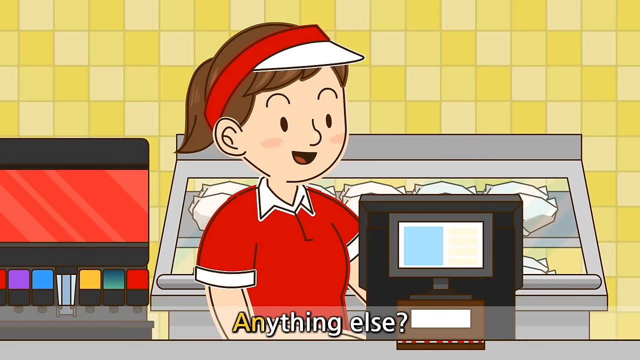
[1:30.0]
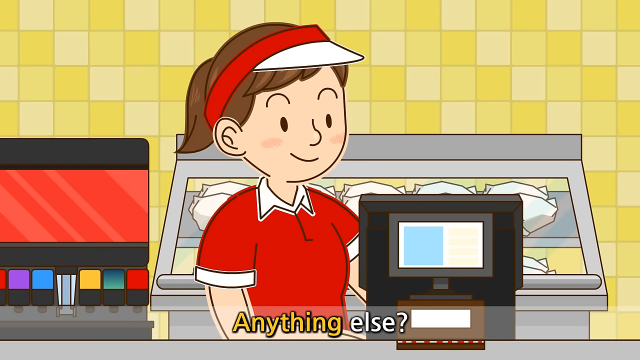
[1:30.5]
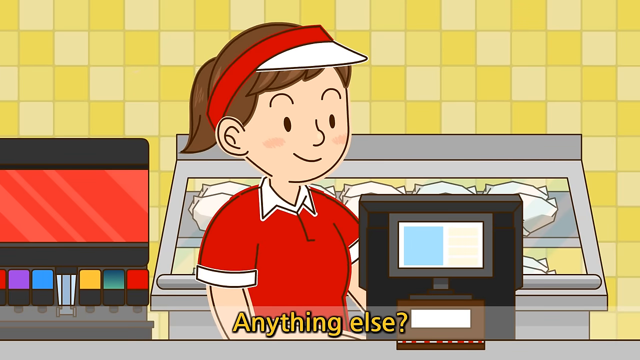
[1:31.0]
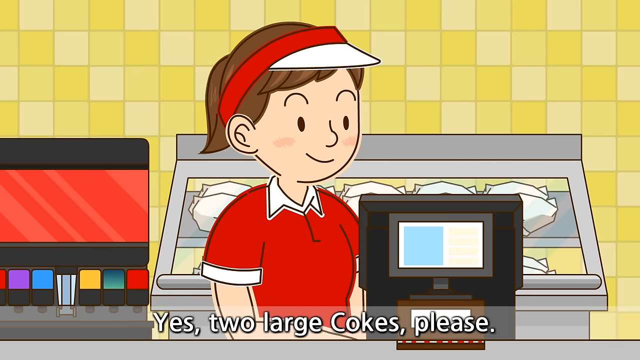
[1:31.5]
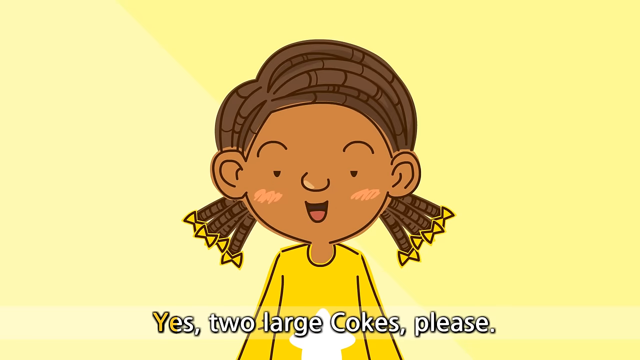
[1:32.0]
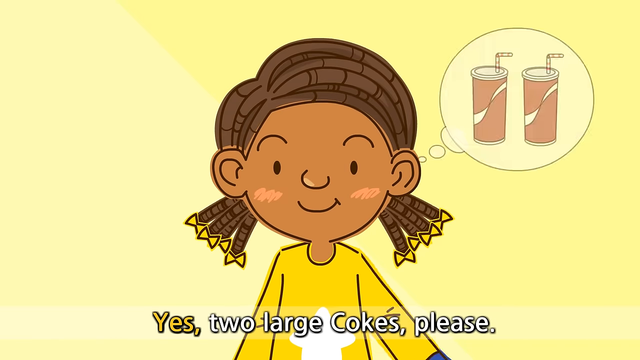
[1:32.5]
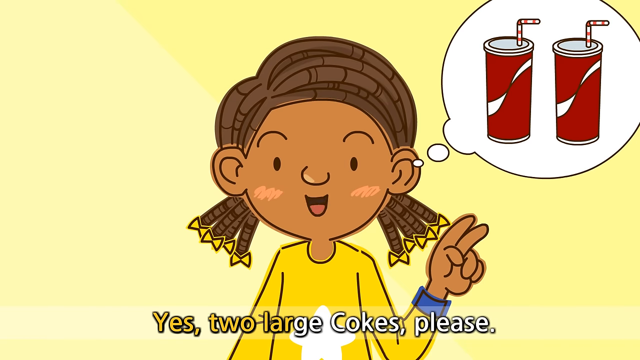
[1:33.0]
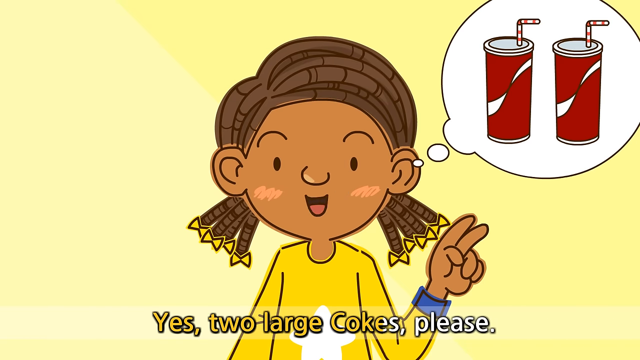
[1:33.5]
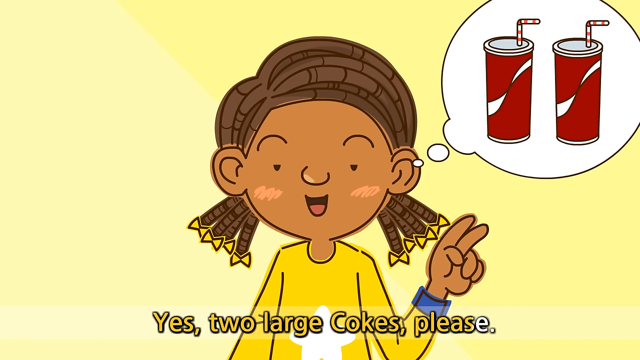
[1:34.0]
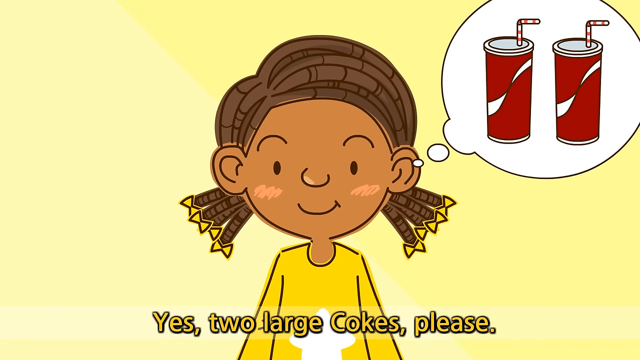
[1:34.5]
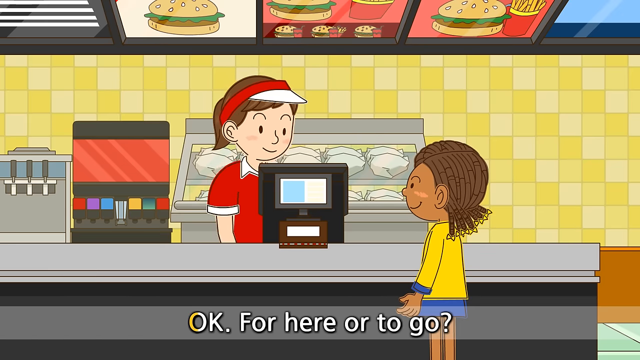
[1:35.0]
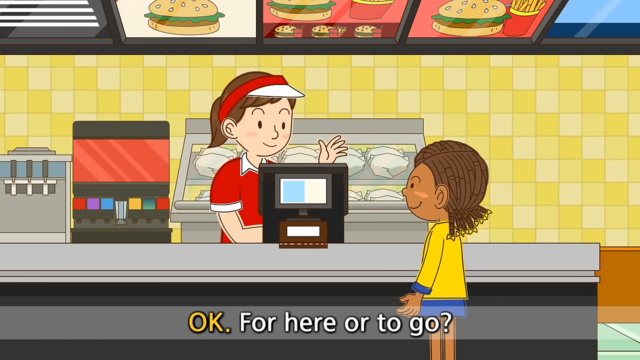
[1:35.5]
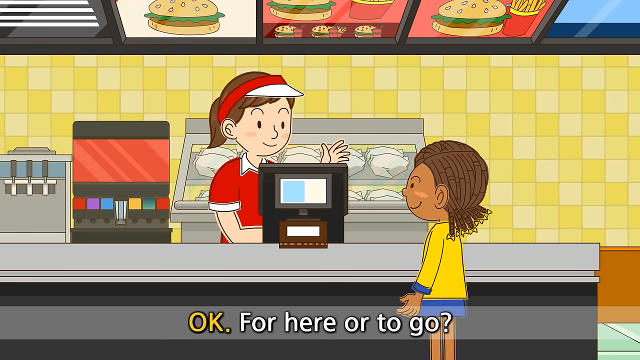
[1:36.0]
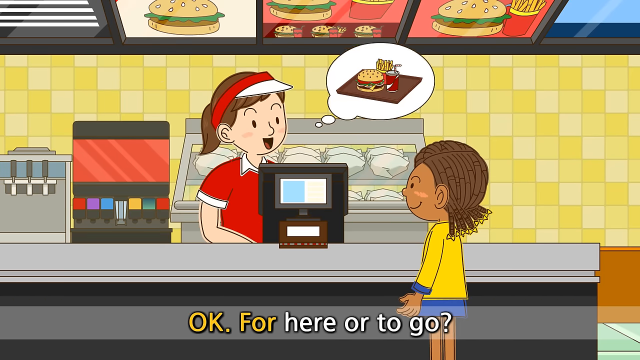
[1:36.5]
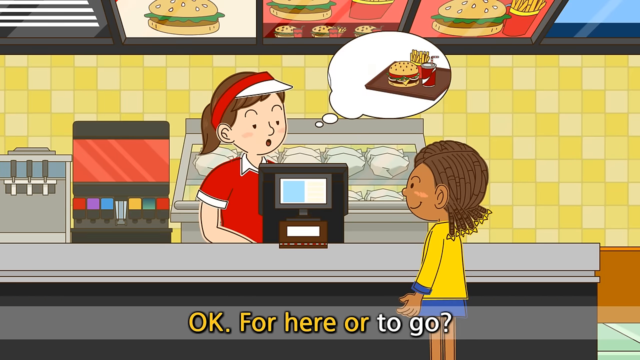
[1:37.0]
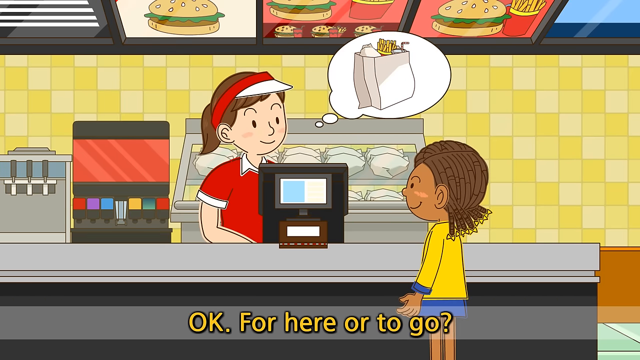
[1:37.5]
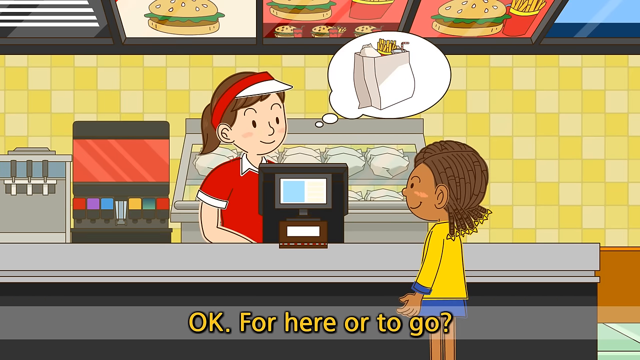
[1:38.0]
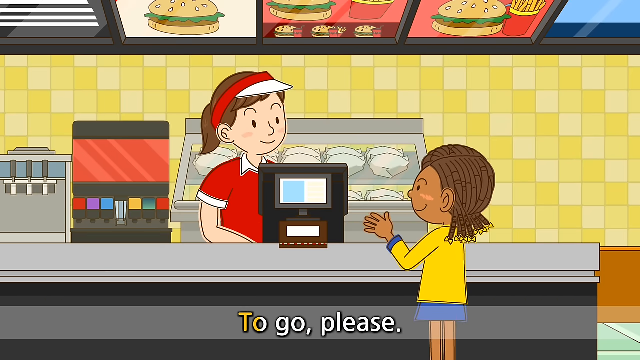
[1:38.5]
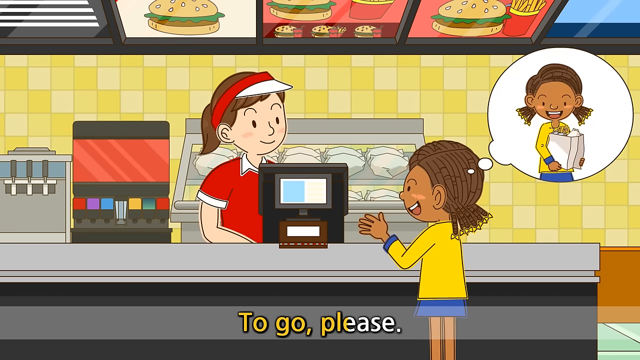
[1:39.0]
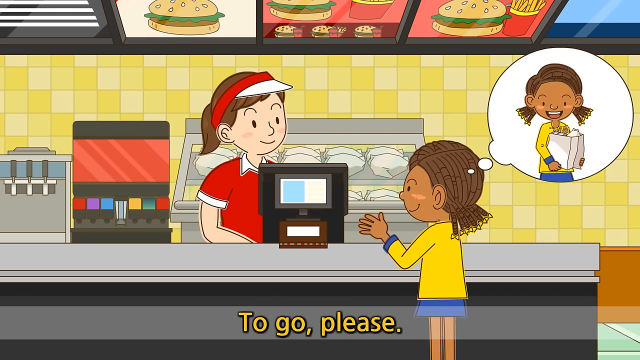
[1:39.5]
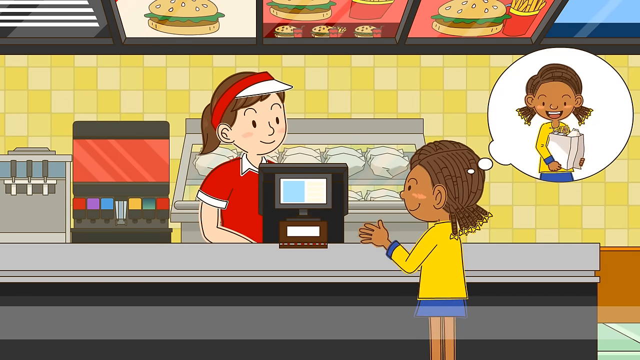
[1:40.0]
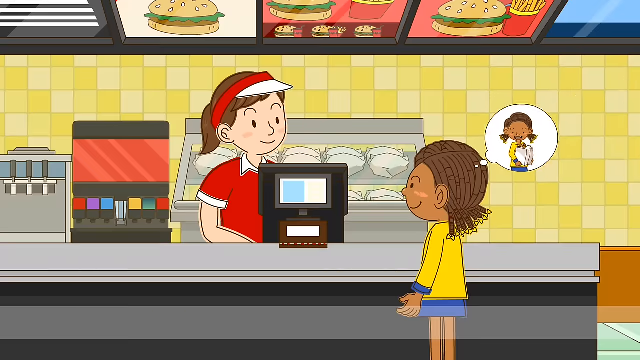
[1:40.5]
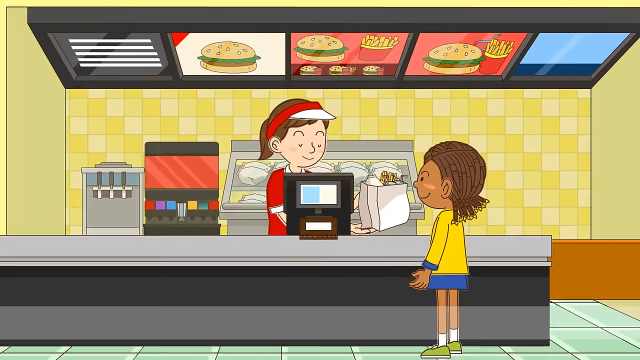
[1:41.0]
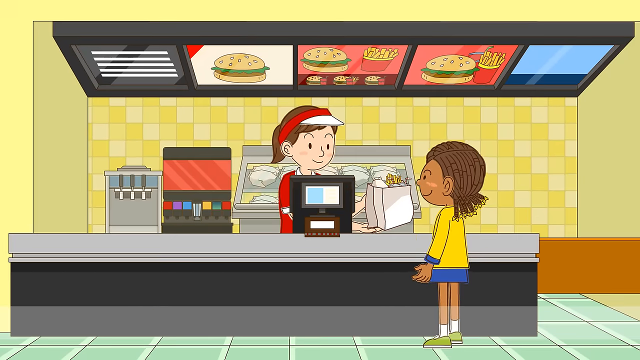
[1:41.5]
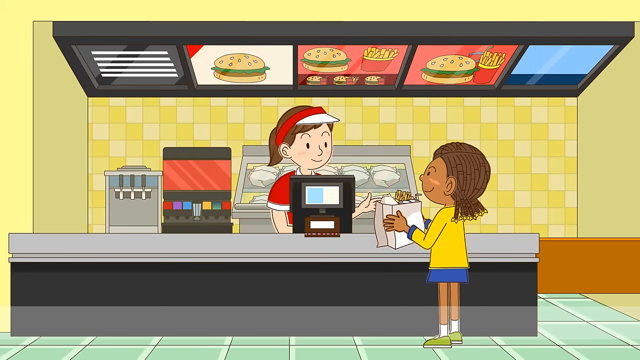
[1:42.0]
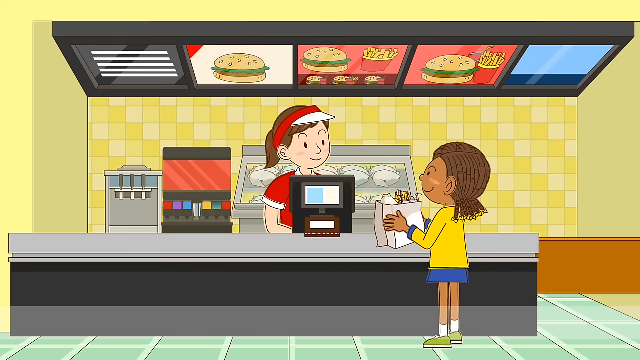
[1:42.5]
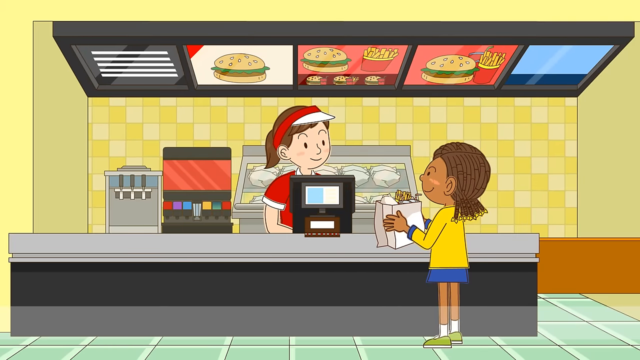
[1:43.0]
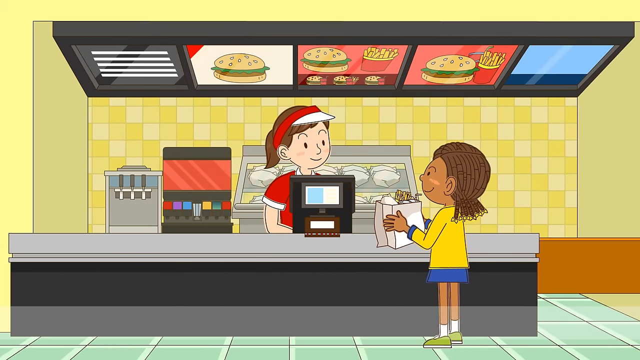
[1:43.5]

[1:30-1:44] In a cartoon, a restaurant worker behind the cash register talks to an African-American little girl who holds up two fingers as she says she would like two Cokes, please. When asked whether it is for here or to go, the little girl says to go, so she gets a bag of food instead of a tray. The little girl has yellow bows in her hair and pink cheeks, and wears a yellow shirt with a royal blue skirt. In the background behind the worker is something like a warmer holding various items wrapped in what looks like paper, and at the back are pop areas for refills.